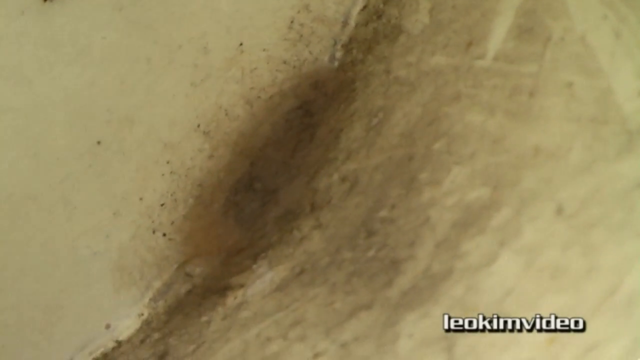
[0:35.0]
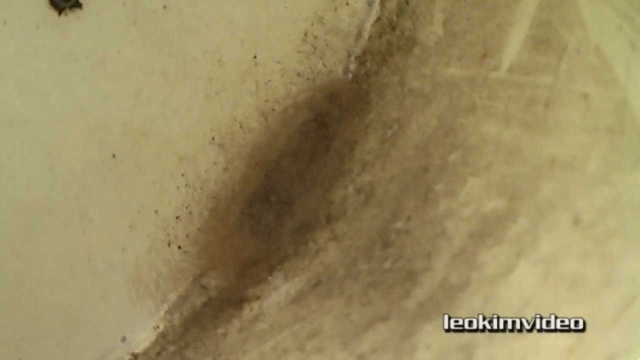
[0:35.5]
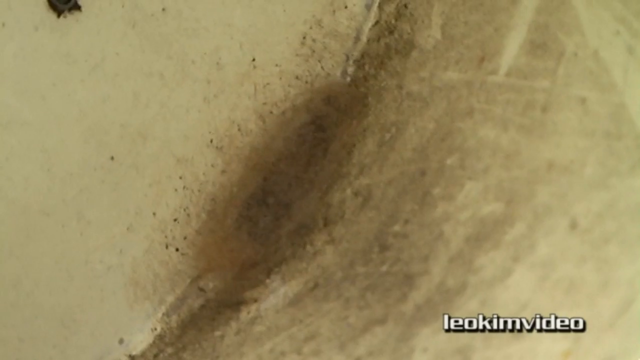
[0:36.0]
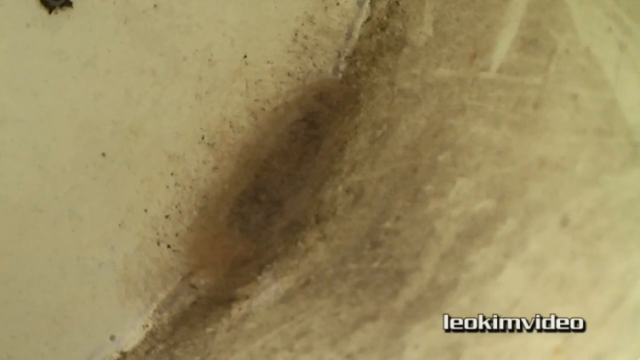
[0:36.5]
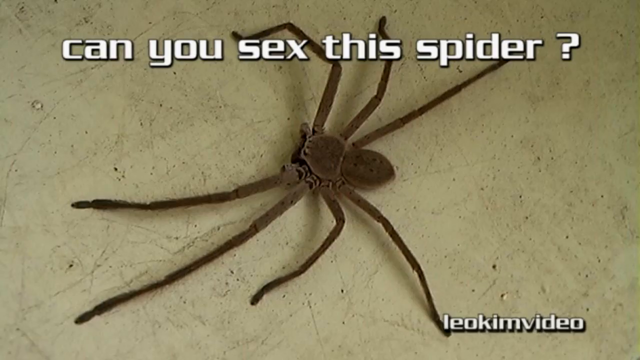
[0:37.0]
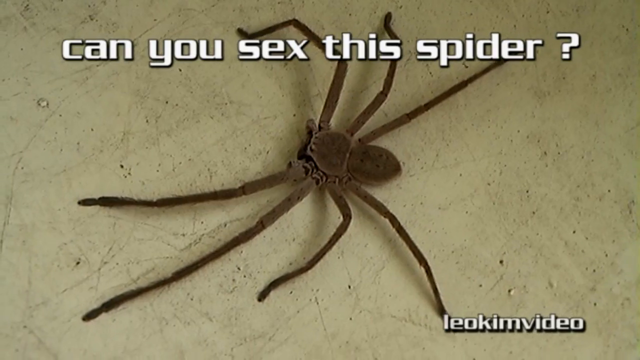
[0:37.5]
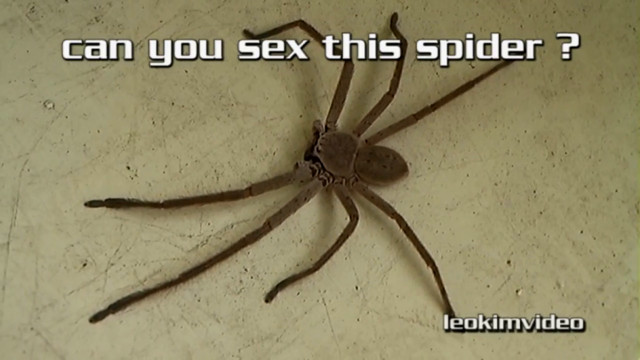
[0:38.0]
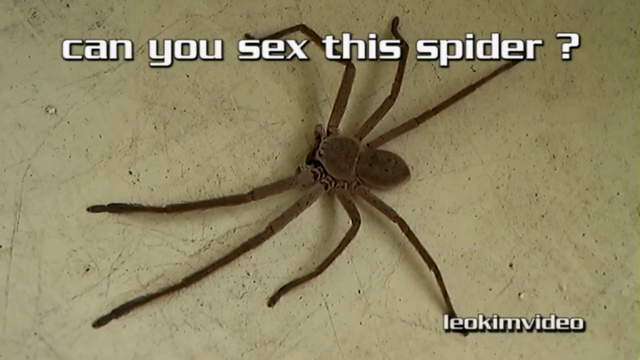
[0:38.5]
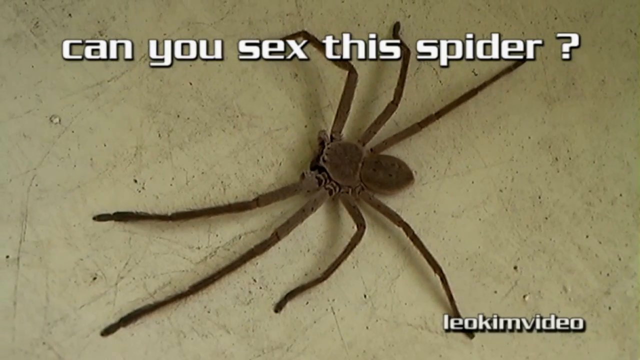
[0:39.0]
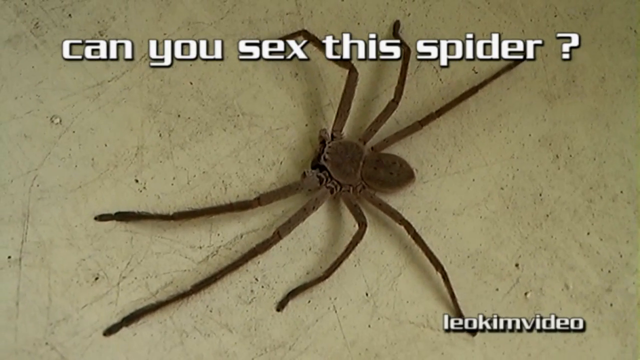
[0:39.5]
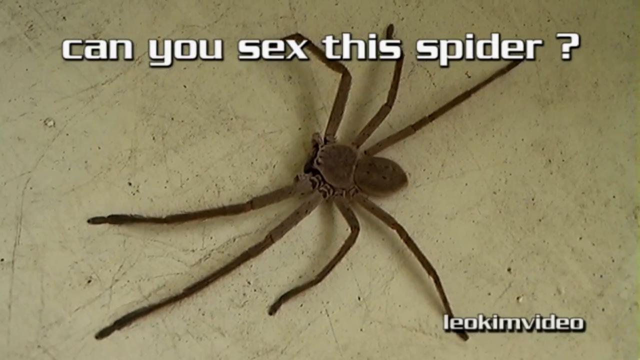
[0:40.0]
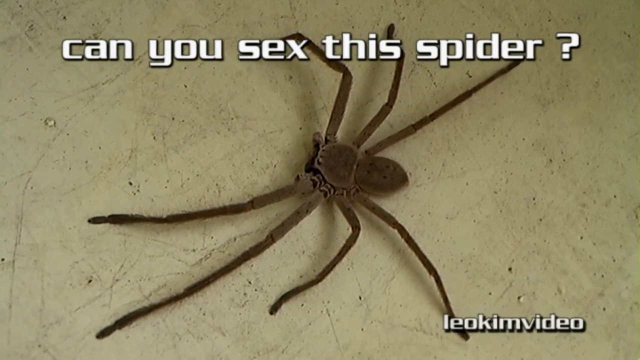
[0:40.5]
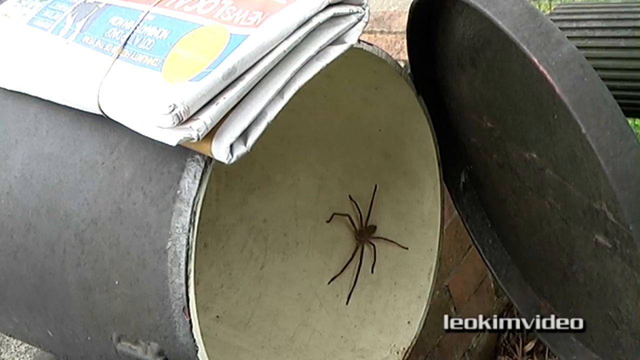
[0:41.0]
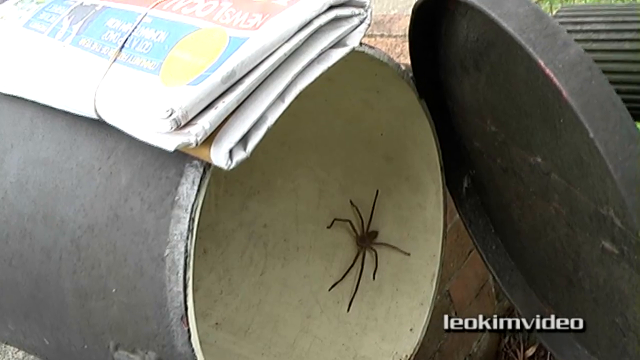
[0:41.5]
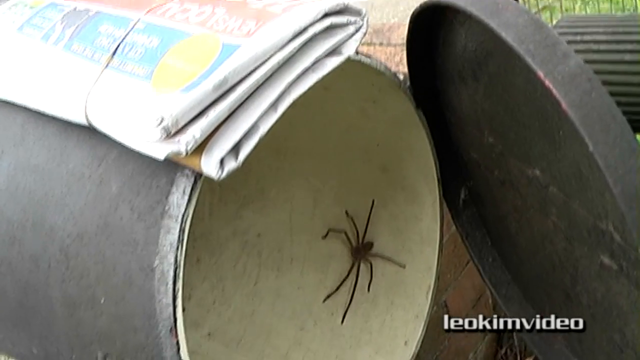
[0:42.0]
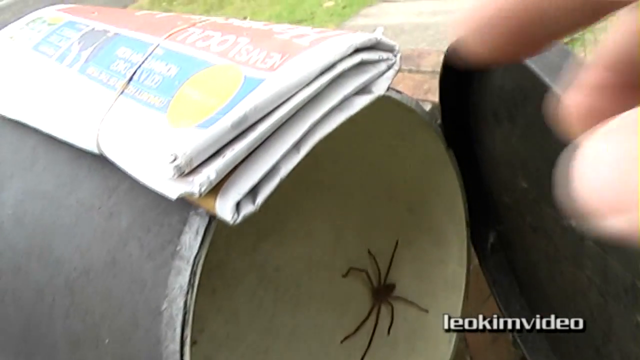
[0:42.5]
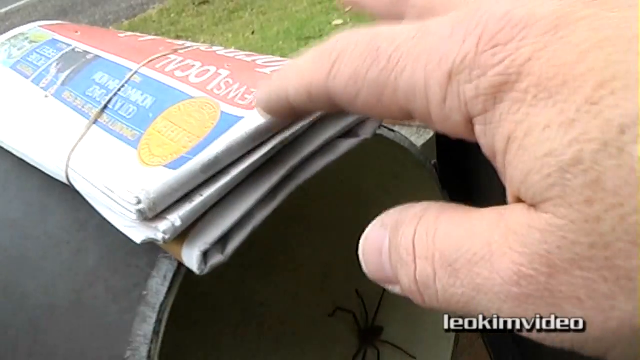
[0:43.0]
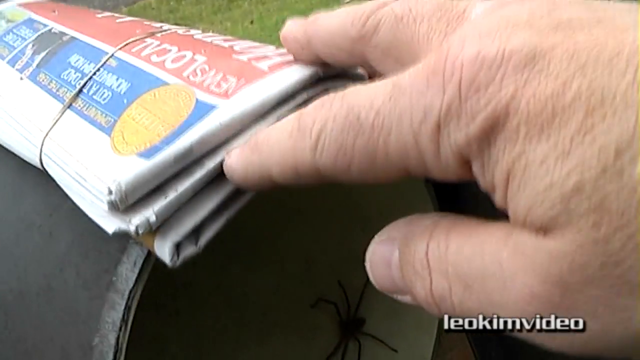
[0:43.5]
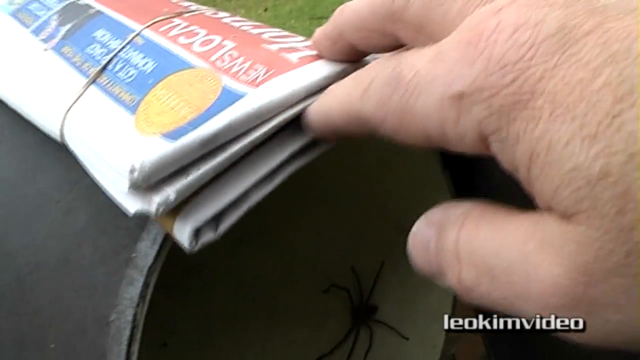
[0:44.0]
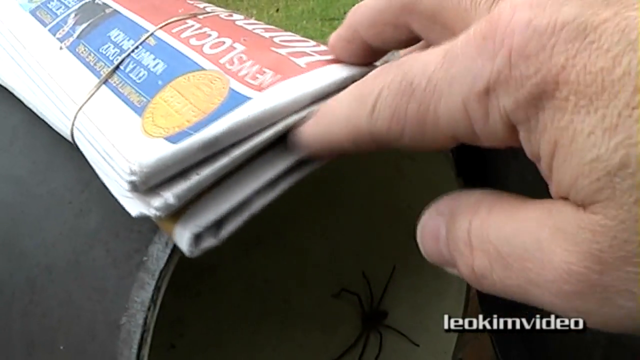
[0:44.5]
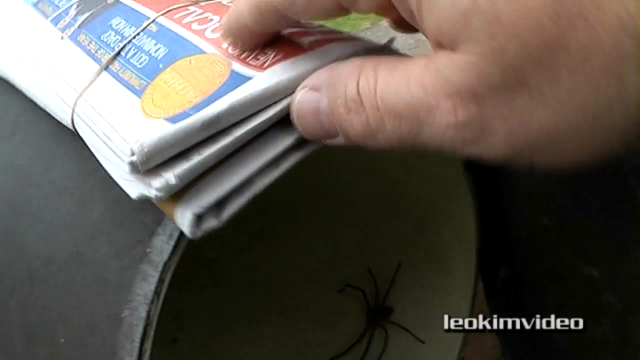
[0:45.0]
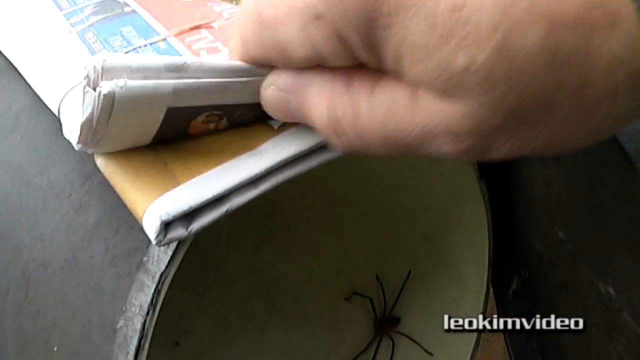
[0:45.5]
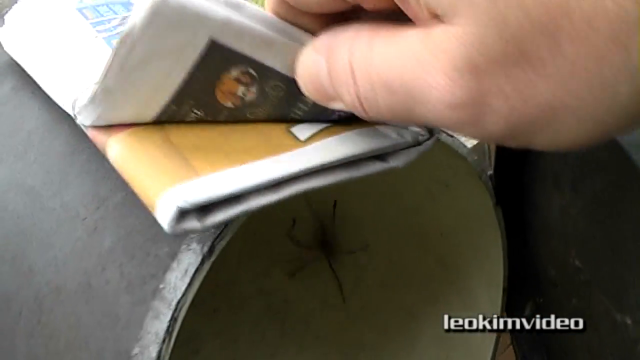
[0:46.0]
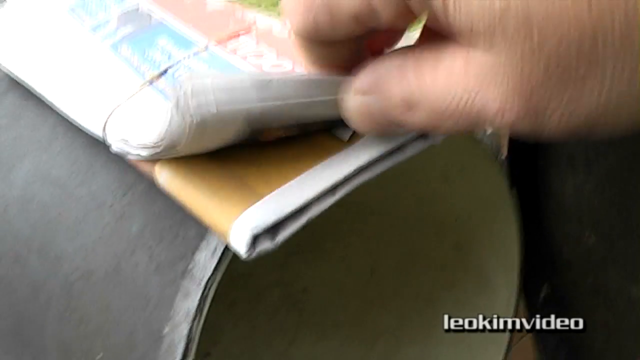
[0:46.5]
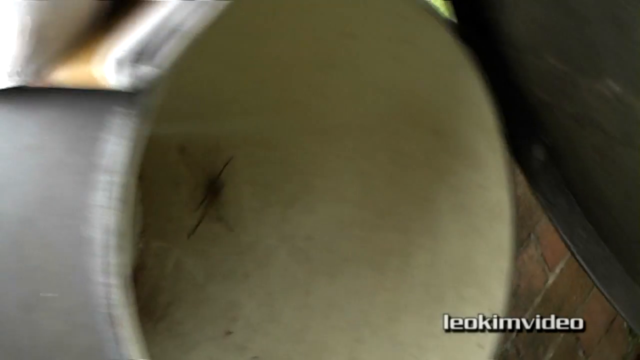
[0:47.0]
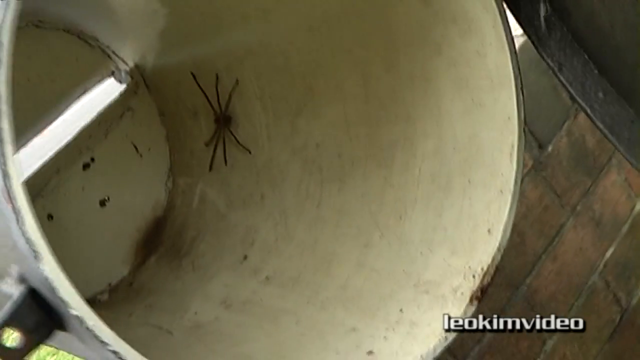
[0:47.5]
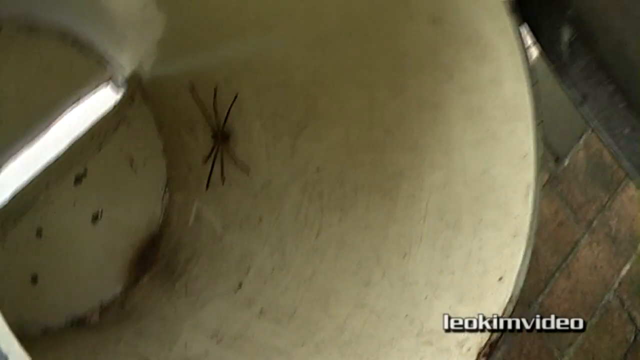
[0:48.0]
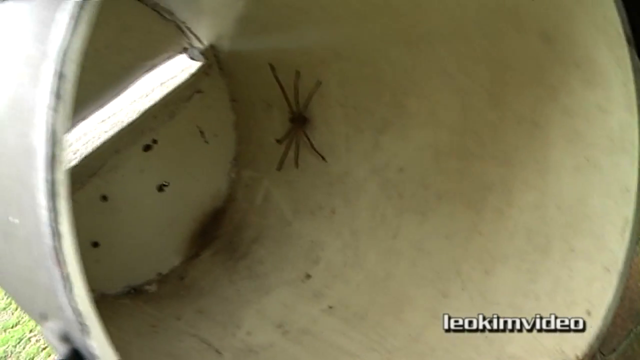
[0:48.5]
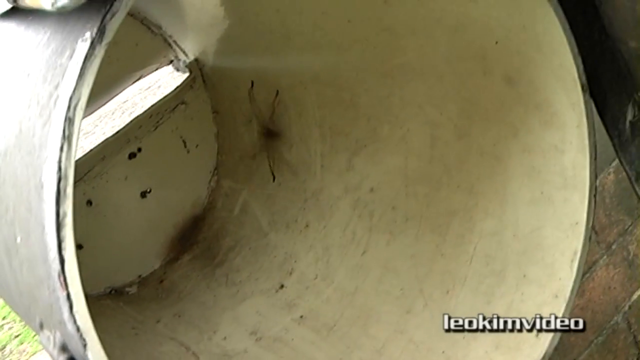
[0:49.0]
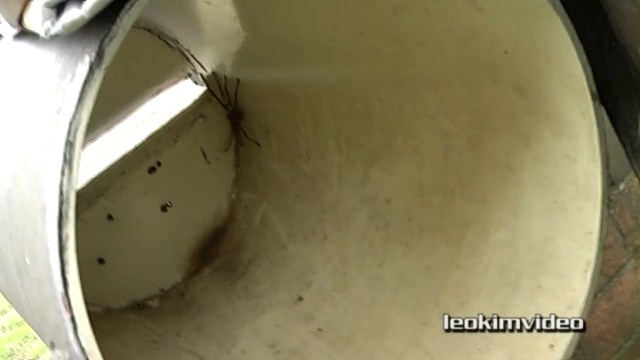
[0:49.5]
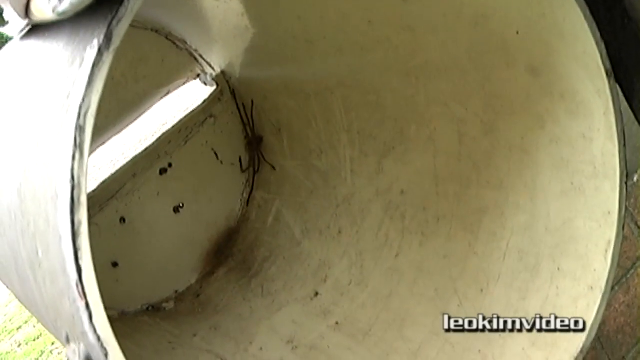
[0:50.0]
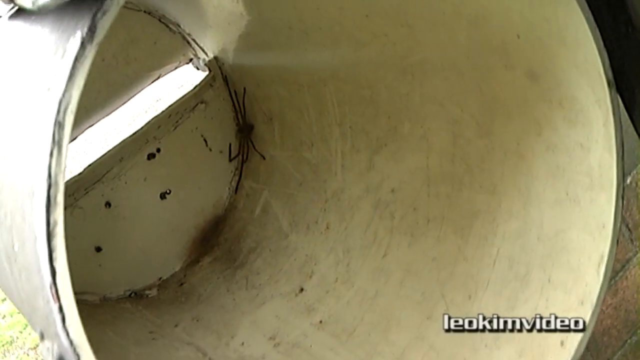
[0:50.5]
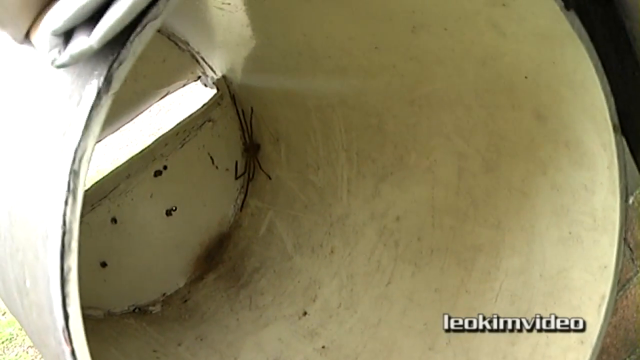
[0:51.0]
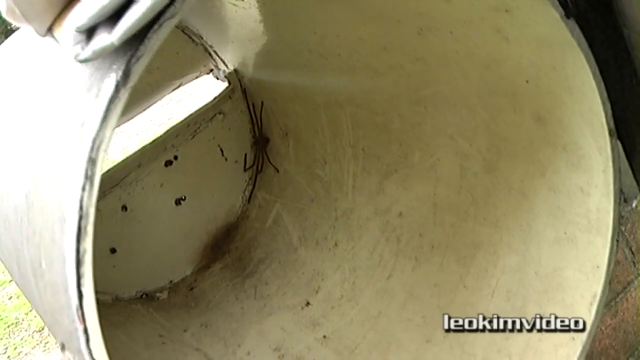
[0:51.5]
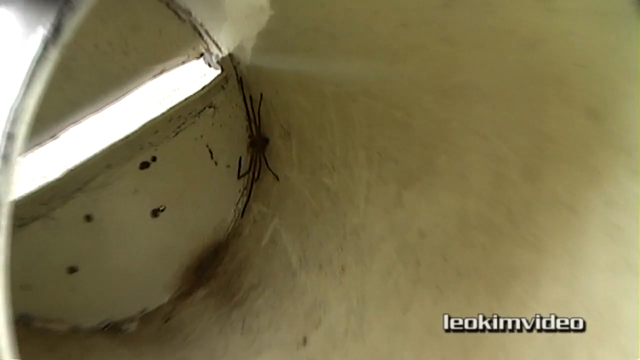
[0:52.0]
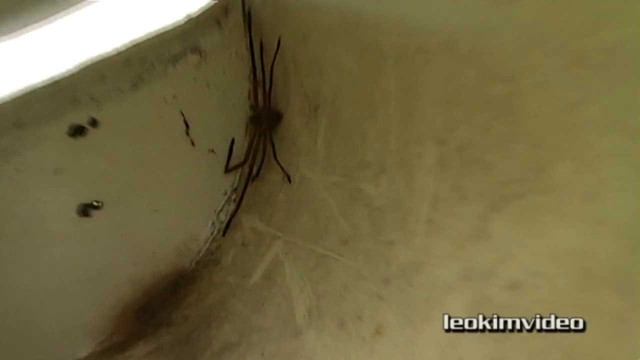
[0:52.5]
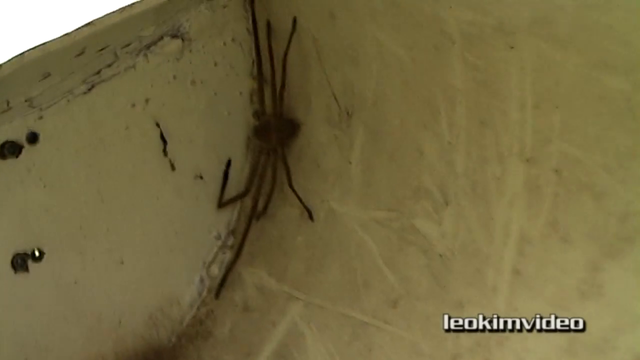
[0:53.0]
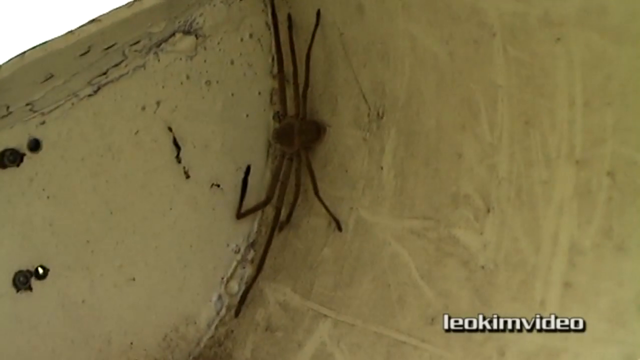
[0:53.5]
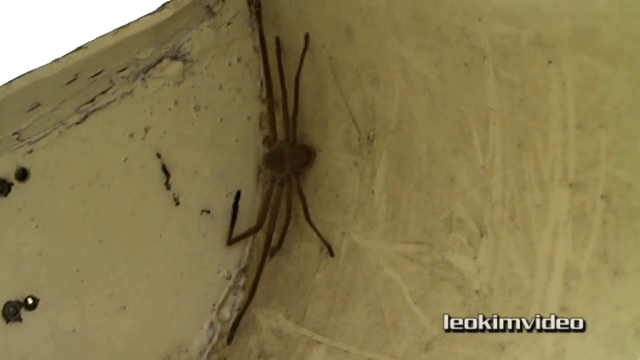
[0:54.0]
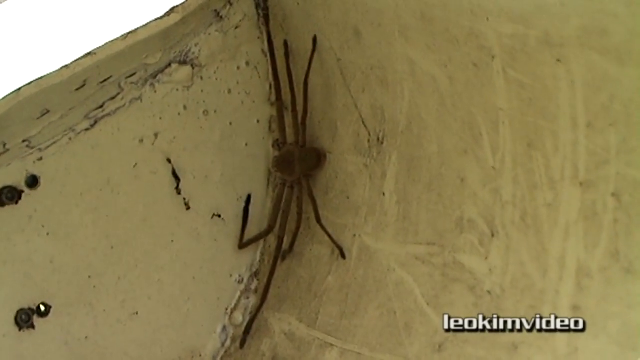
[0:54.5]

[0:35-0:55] The view looks directly at the nest at the back of the same mailbox, along with the mail and the paper. As the man moves around a bit, the spider runs to the back of the mailbox, apparently toward its nest; it does not run out, even though there is a slot in the back. The paper from the paper box is folded in half, kind of rolled and rubber-banded, with many folds. The man kind of slides his fingers between the papers in the folded newspaper, seemingly checking for a spider. Text reads "can you sex this spider?"